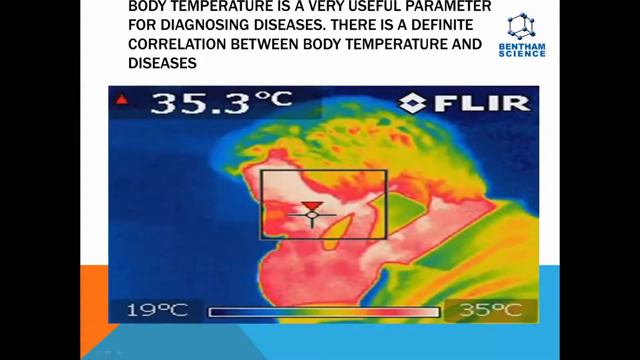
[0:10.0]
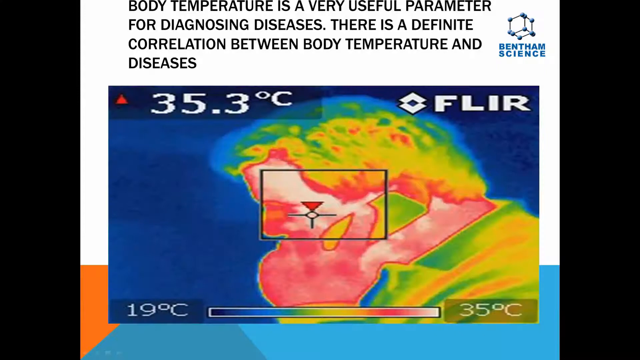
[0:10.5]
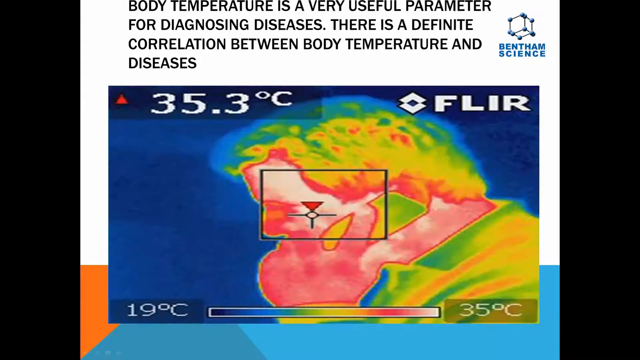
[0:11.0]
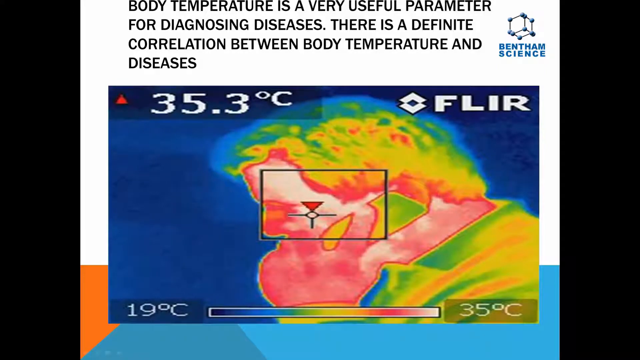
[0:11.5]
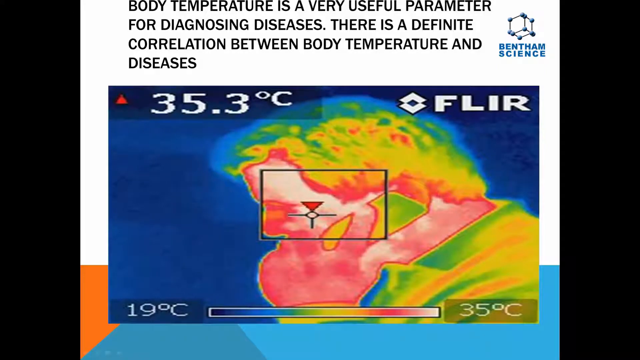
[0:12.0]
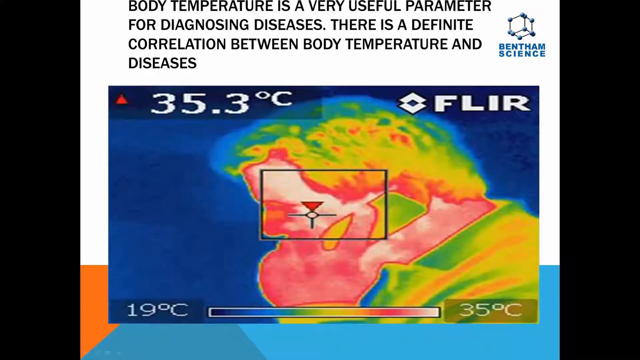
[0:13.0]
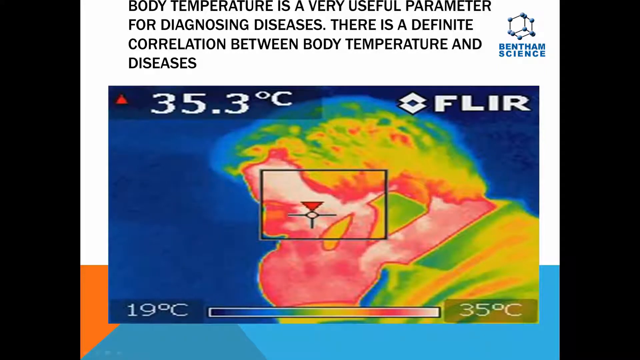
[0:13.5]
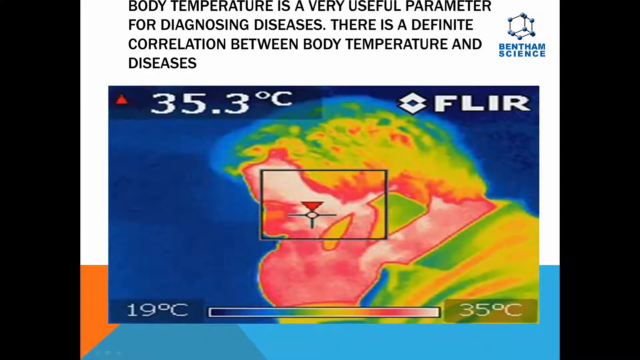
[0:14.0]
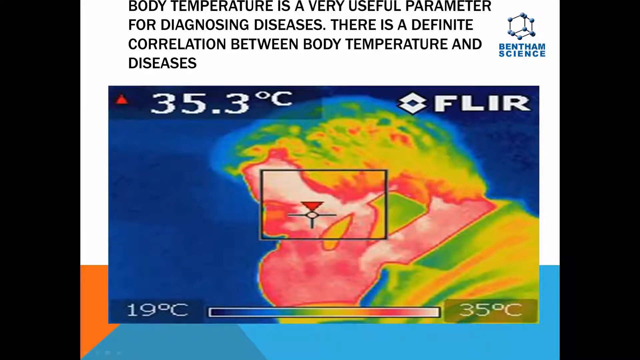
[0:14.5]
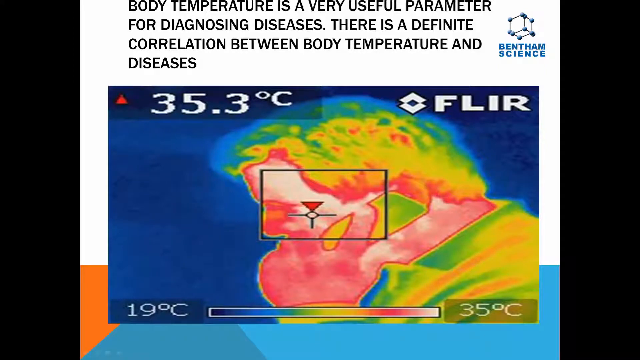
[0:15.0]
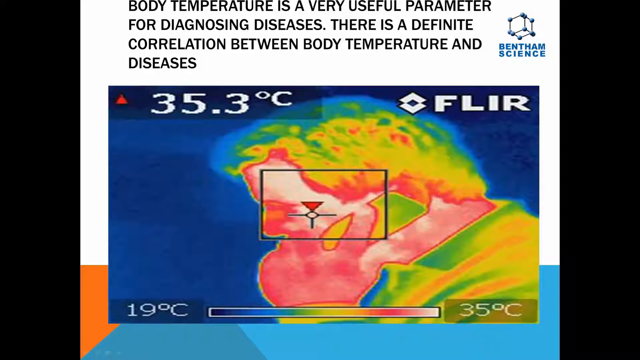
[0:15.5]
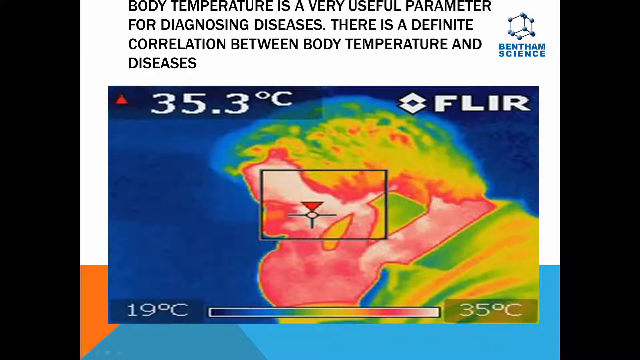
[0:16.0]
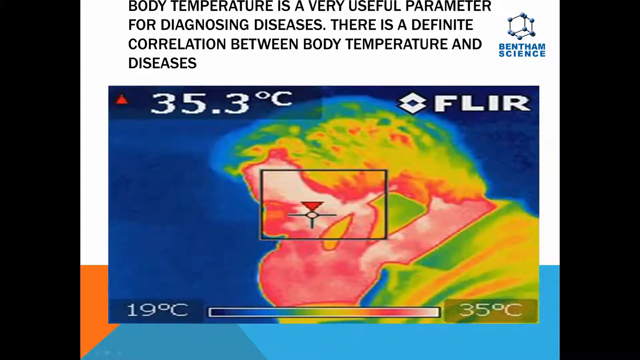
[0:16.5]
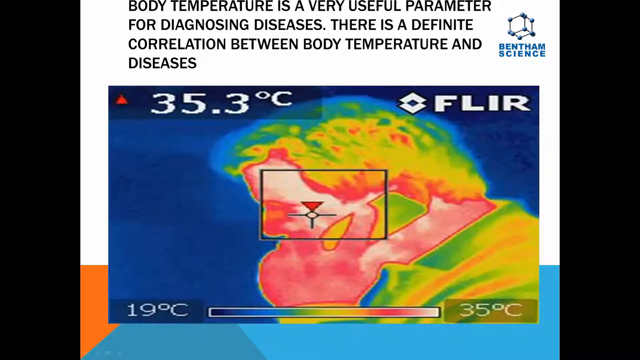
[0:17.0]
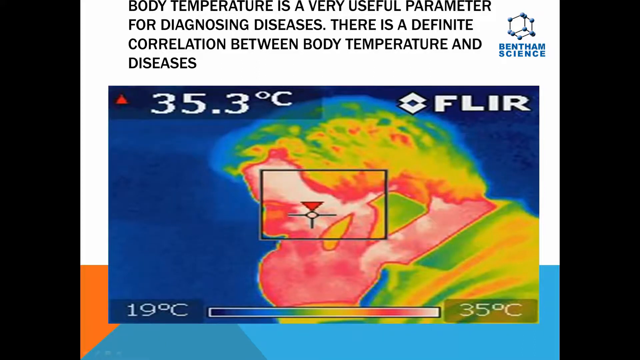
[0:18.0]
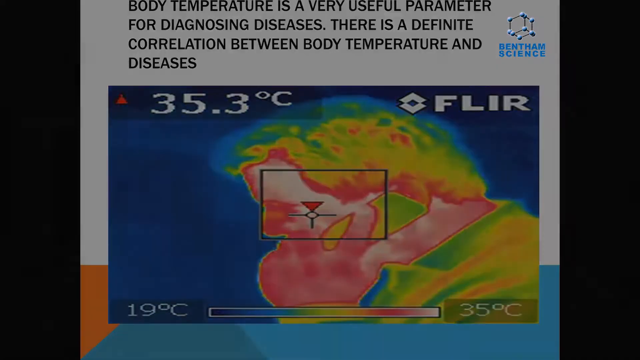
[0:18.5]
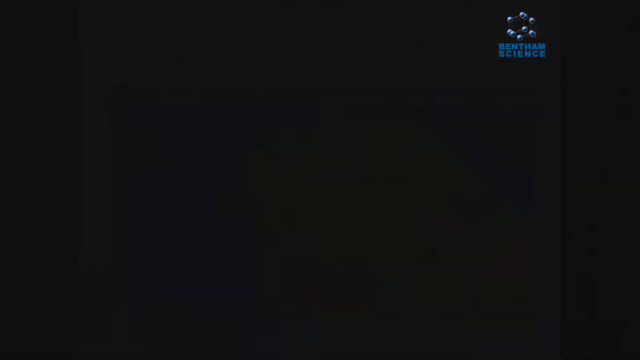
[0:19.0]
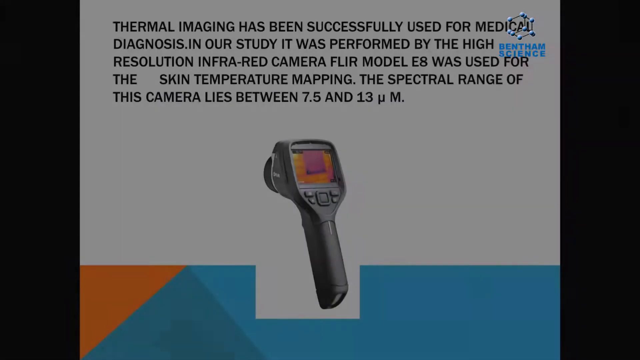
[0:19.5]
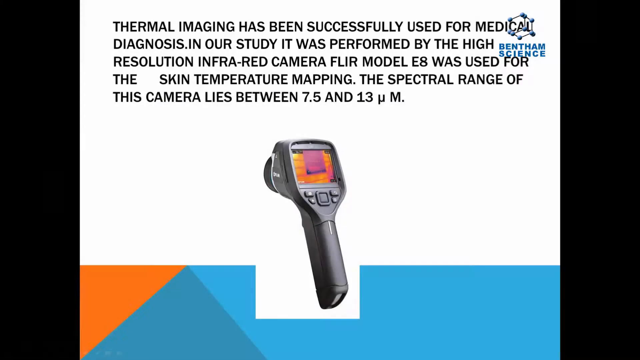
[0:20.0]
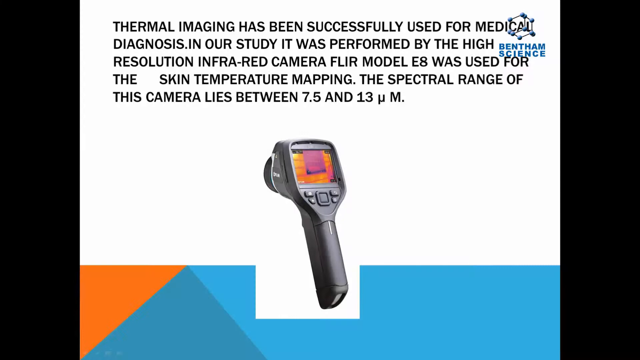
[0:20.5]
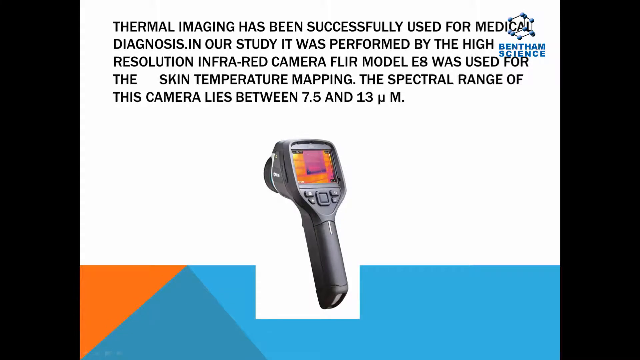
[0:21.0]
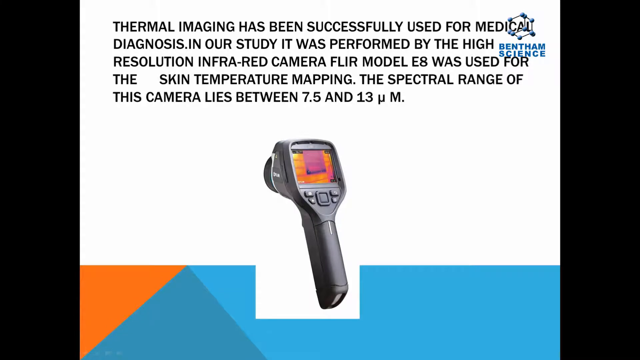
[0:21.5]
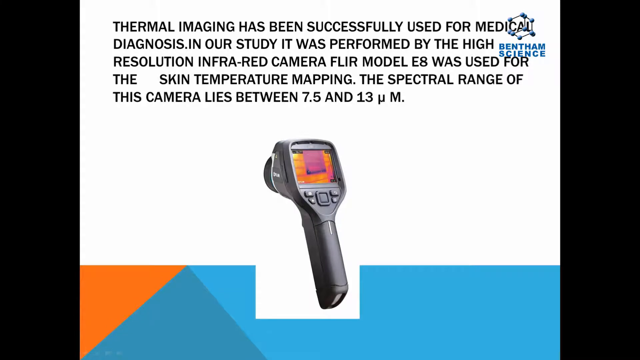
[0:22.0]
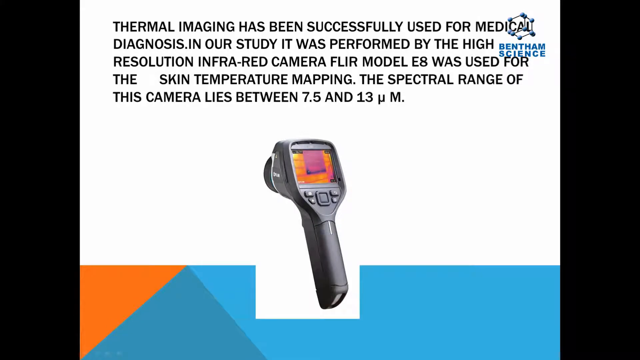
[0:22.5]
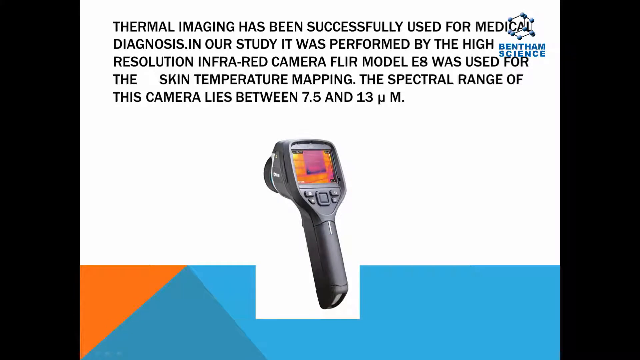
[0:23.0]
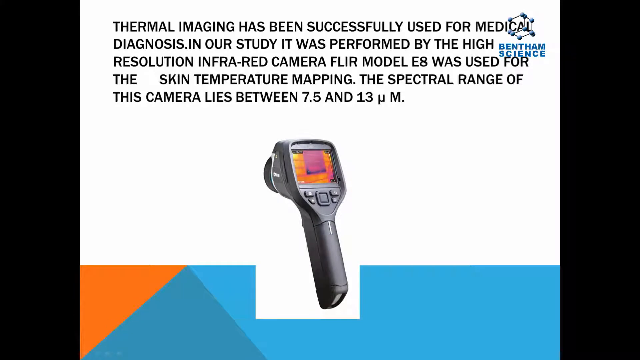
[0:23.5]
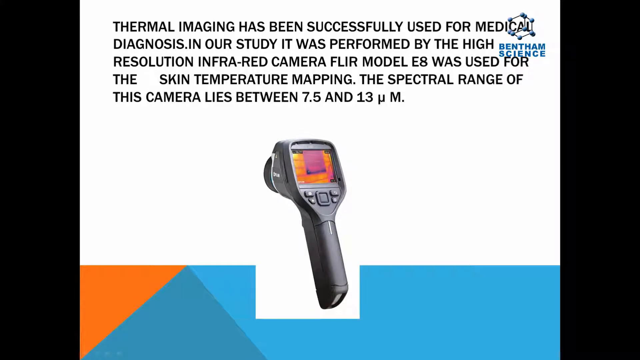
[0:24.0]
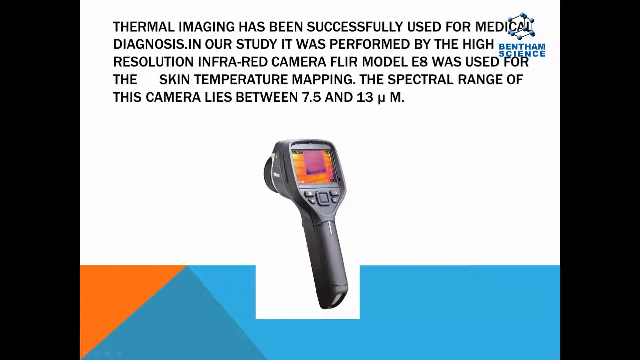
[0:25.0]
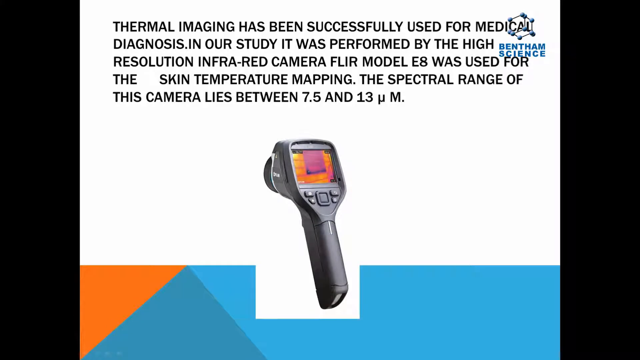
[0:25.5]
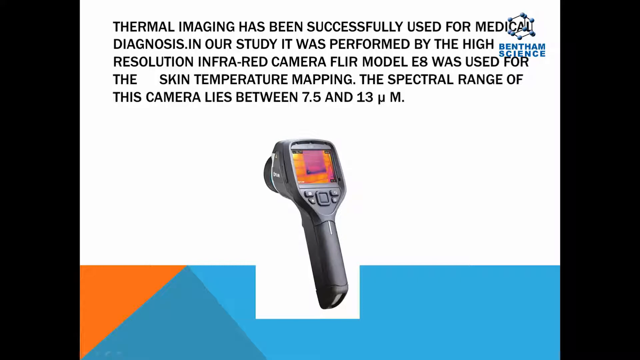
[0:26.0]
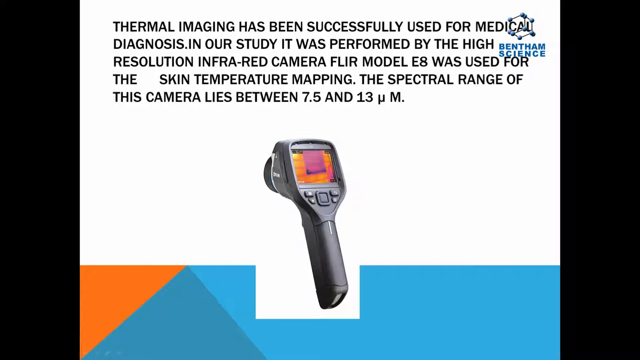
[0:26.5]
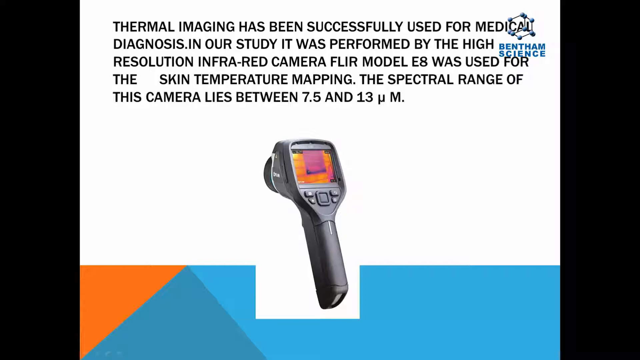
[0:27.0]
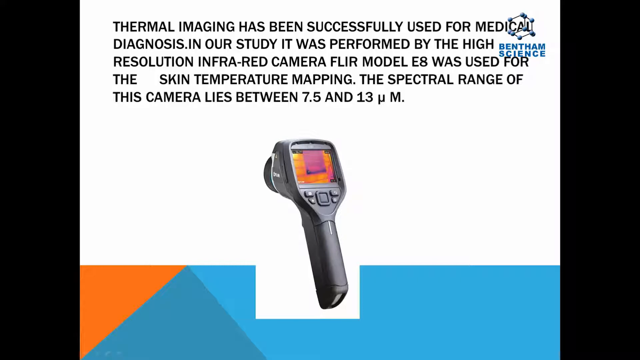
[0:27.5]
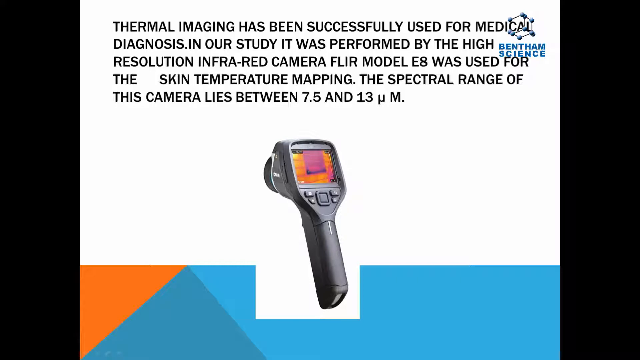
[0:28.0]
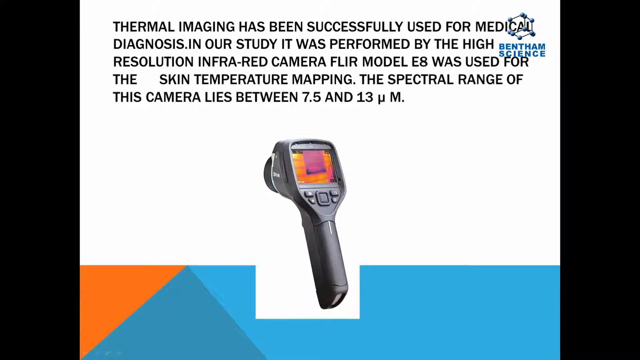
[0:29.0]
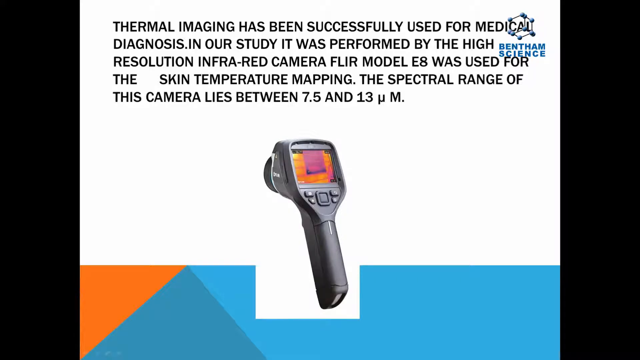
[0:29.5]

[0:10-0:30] An infrared camera view shows a man talking on his cell phone, holding it in his left hand up to his left ear. He is made up of colours such as red, white, yellow and green: his skin is mostly red with a little white, his hair is mostly yellow with a little green, and his shirt is mostly green mixed with yellow. Blue surrounds him. A temperature of 35.3 Celsius appears in the upper left and the term "FLIR" in the upper right of the image. In the top right section of the screen is the Bentham Science emblem, a 3D cube with little blue balls on each corner. Text on a white background around the infrared picture reads "body temperature is a very useful parameter for diagnosing diseases. There's a definite correlation between body temperature and diseases." Below the man's picture is a temperature graph with 19 Celsius on the left and 35 Celsius on the right, and a bar between them running from cold colours, blue, on the left to hot colours, red, on the right. After several seconds, the video transitions to a screen with a white background showing a digital thermometer made of black plastic with a large LCD screen on the back, the kind pointed at someone to check their temperature. Above the thermometer a paragraph reads "thermal imaging has been successfully used for medical diagnosis. In our study it was performed by the high-resolution infrared camera FLIR model E8 was used for the skin temperature mapping. The spectral range of the camera lies between 7.5 and 13 micro M." To the lower left of the thermometer is a rectangle whose left side is orange, right side is light blue, with a darker blue pyramid in the center. To the right of the thermometer is an aqua blue rectangle. The Bentham Science 3D cube is in the upper right of the screen.